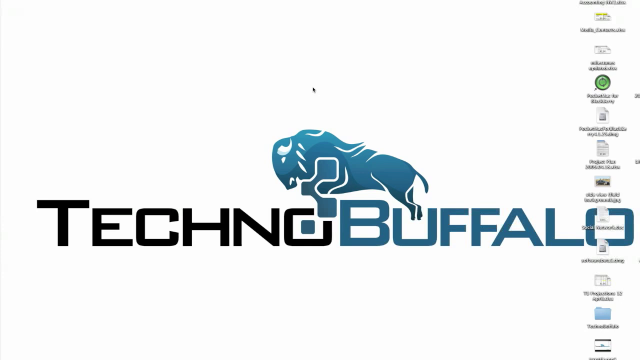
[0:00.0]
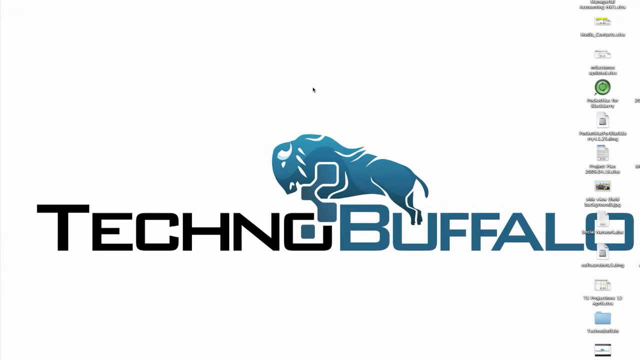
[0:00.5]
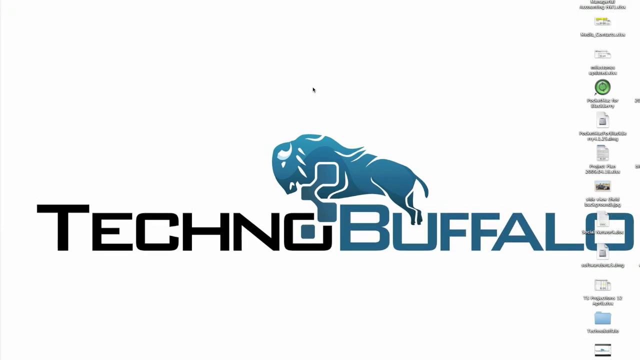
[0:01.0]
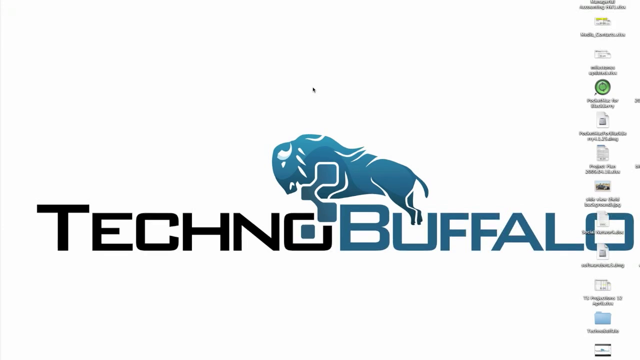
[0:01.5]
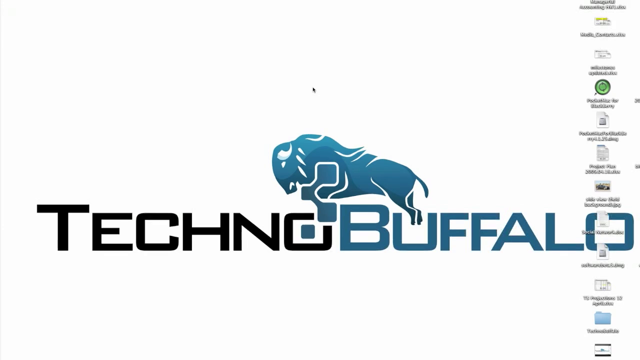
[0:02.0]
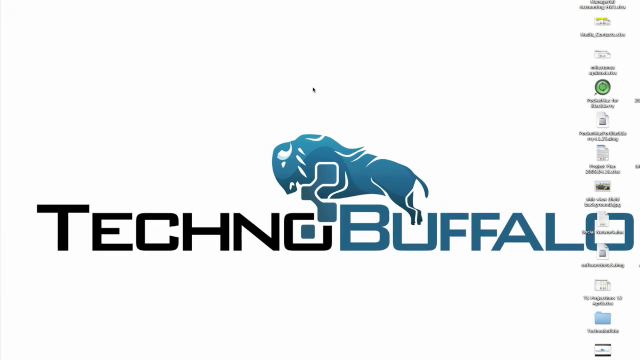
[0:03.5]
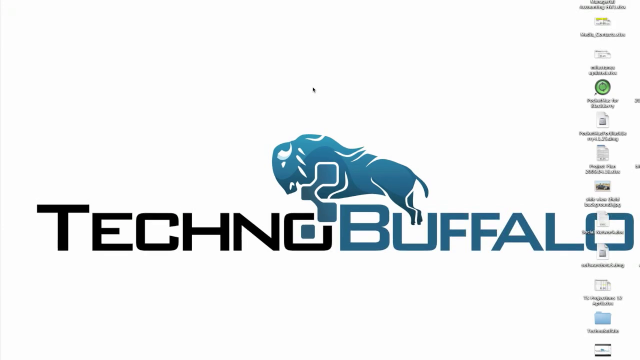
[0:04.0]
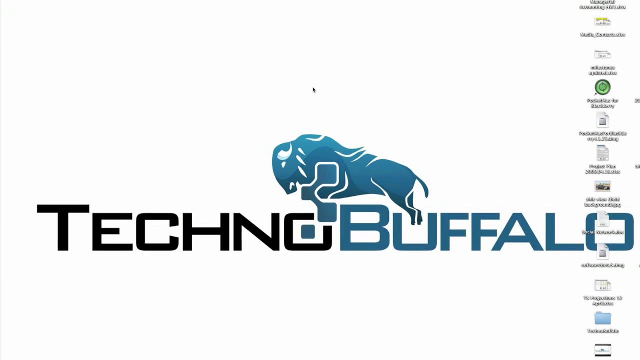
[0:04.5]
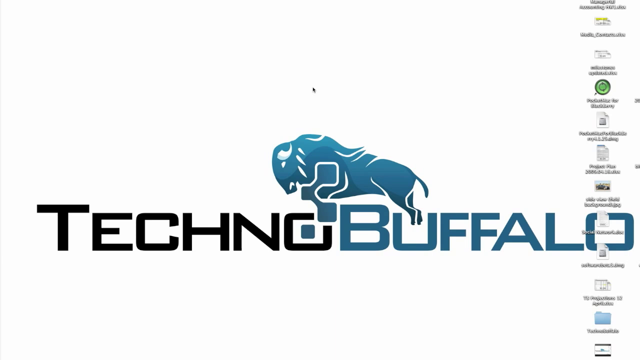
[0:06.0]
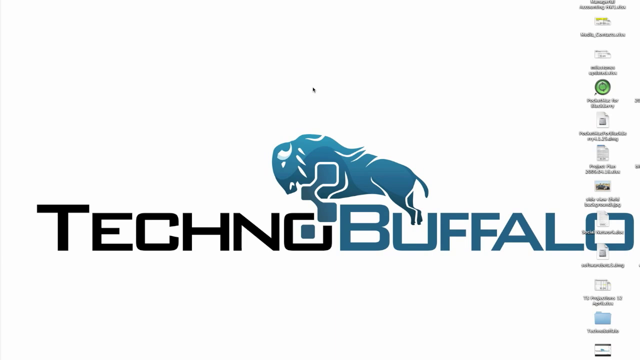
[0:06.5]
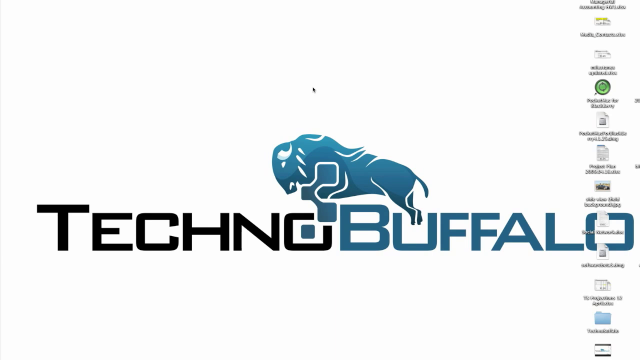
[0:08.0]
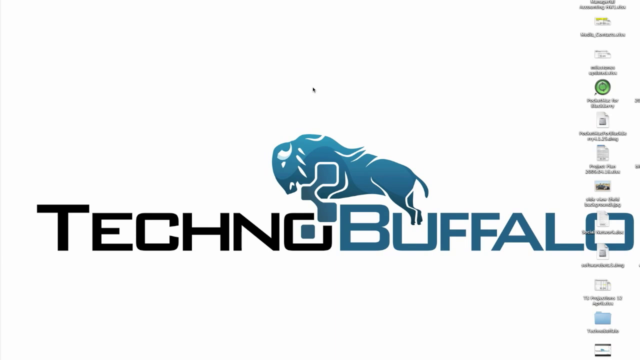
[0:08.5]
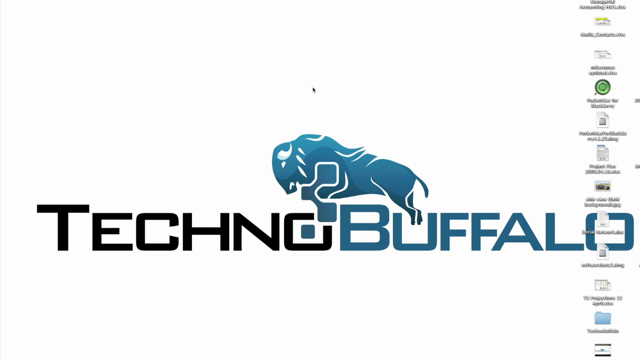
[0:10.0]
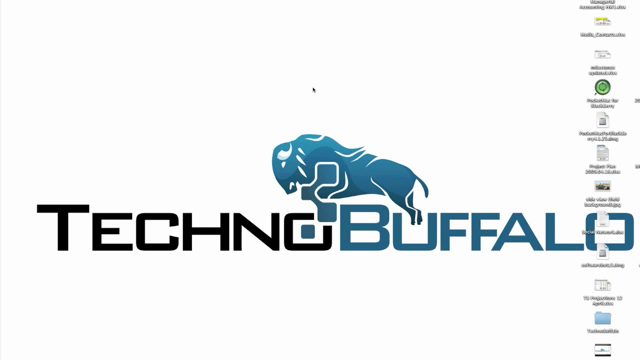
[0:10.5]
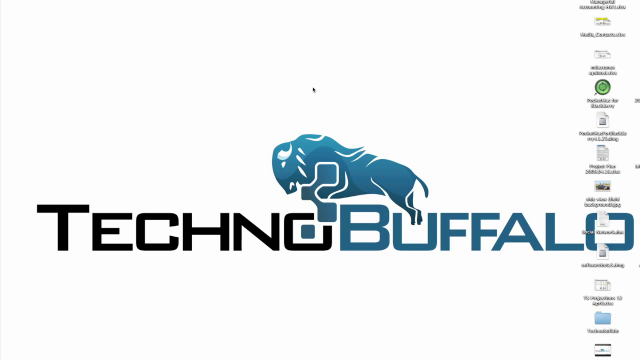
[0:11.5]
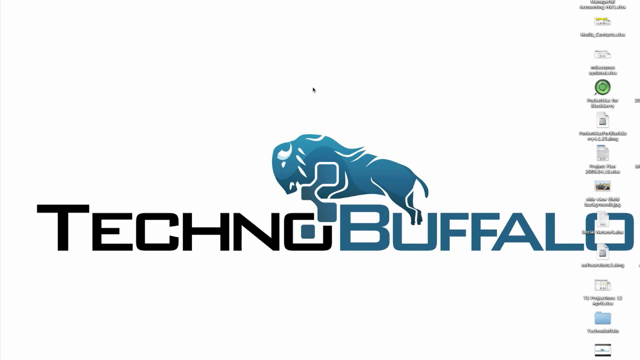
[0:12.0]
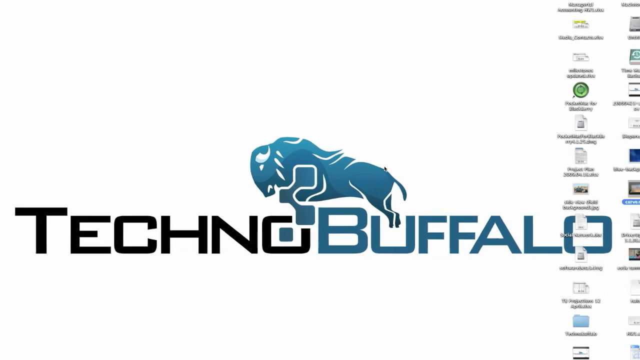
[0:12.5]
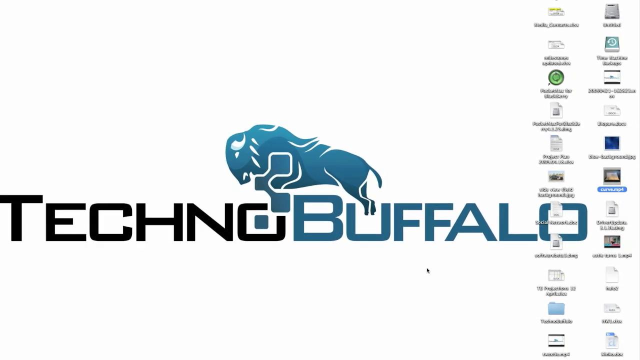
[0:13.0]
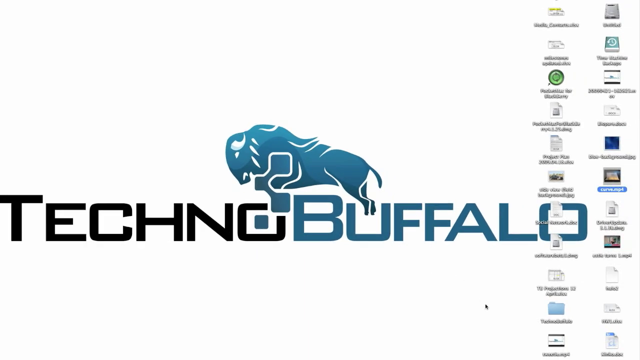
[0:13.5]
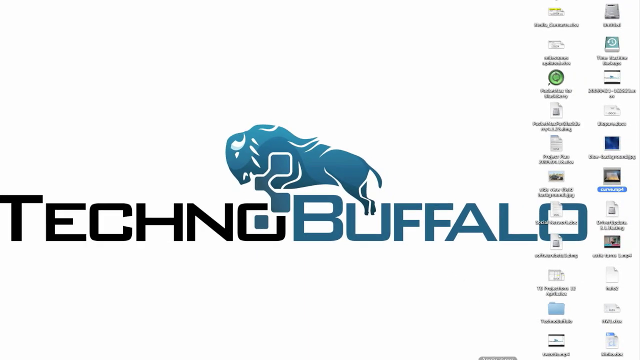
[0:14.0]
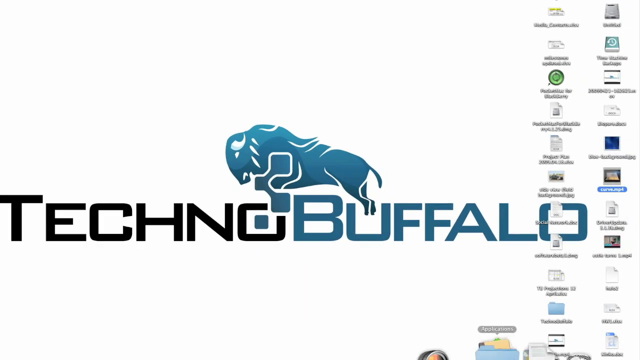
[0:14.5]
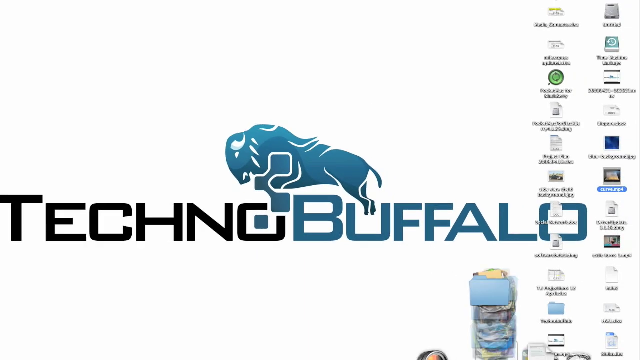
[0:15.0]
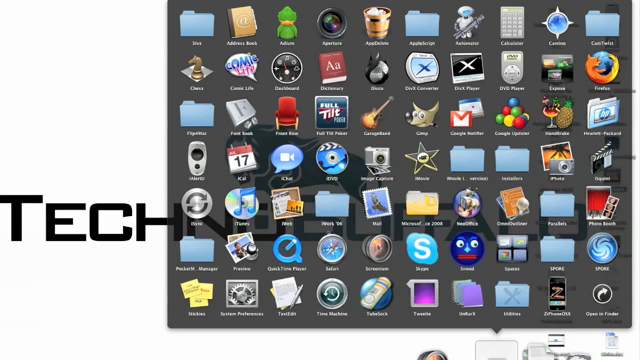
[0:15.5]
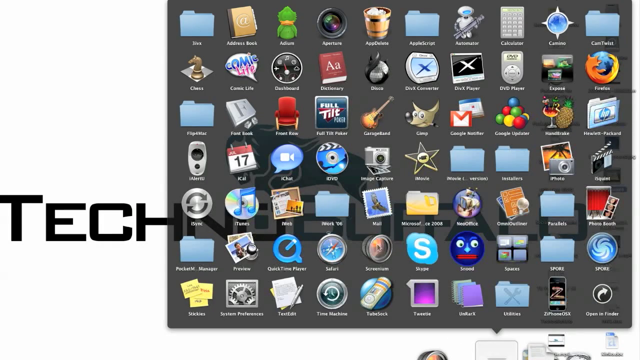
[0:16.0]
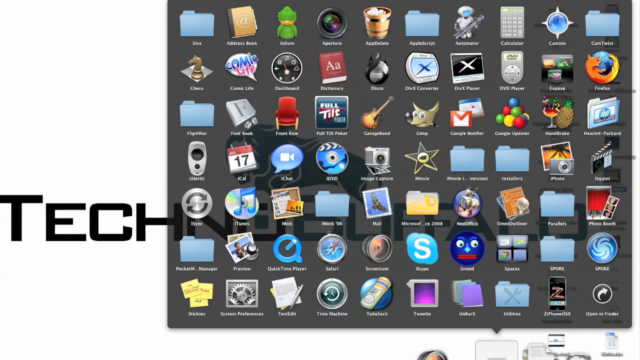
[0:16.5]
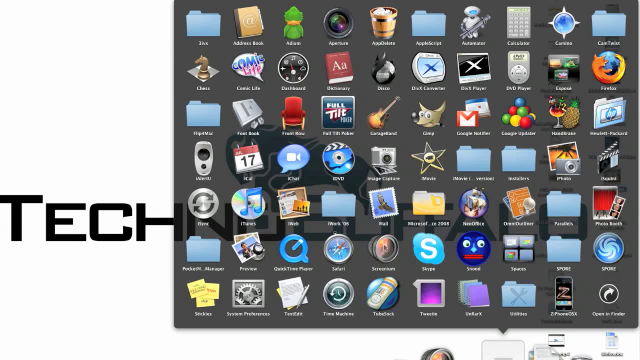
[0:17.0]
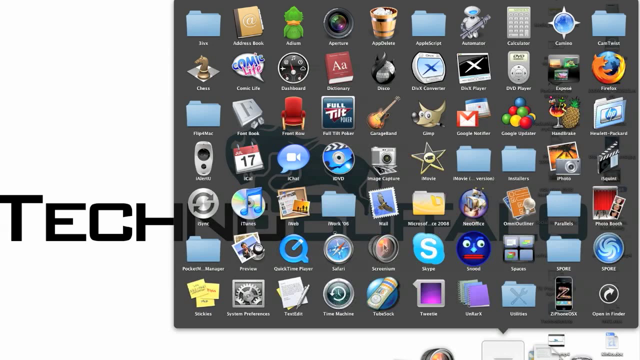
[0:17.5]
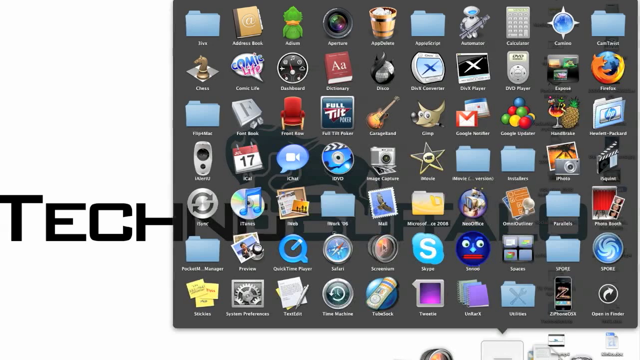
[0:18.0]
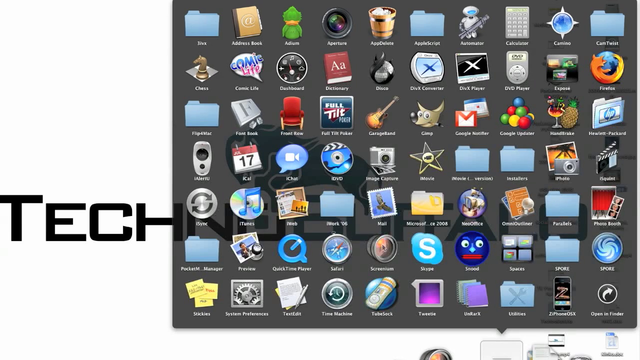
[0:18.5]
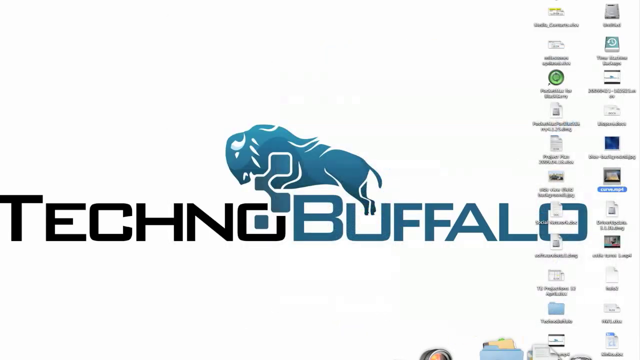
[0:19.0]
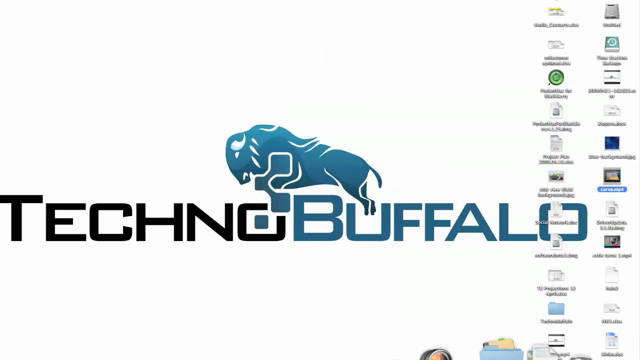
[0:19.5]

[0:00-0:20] A Techno Buffalo logo appears, with a blue buffalo facing left; the word "techno" is in black and the word "buffalo" is in blue. The video seems to be a recording of someone's computer screen. Some apps are on the right side of the screen. The person moves things around the screen with the mouse and pulls up a window containing many different apps and items that look like folders, some of them unusual.